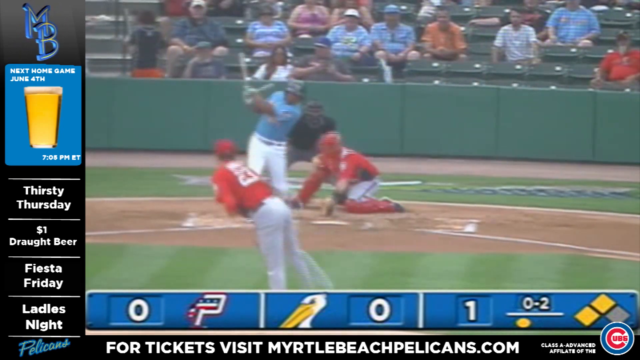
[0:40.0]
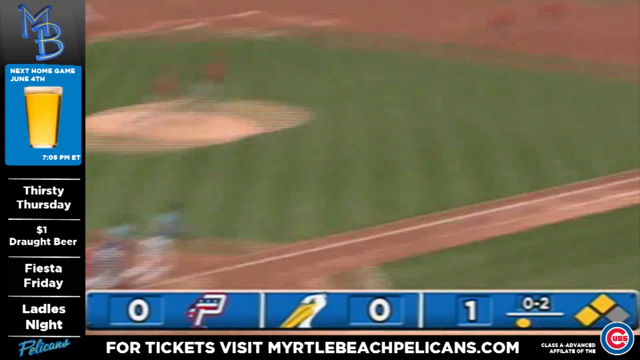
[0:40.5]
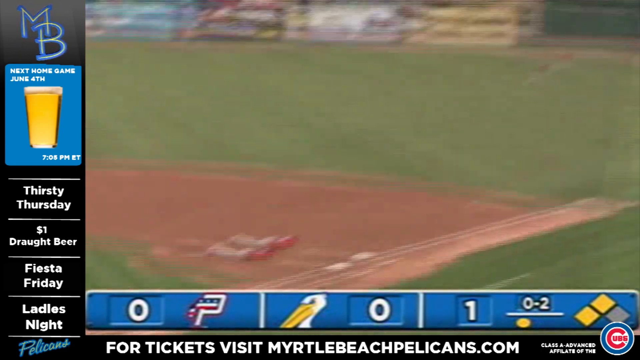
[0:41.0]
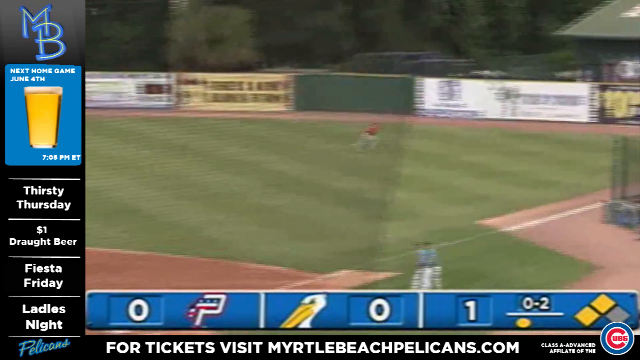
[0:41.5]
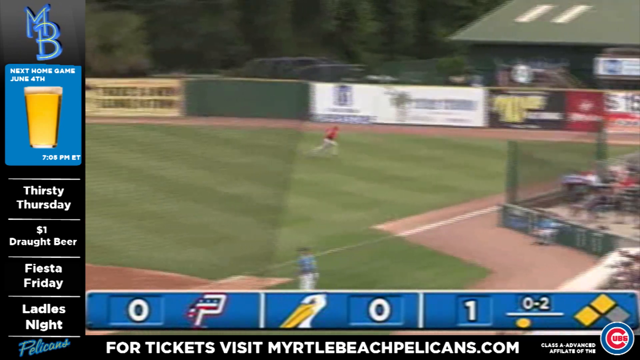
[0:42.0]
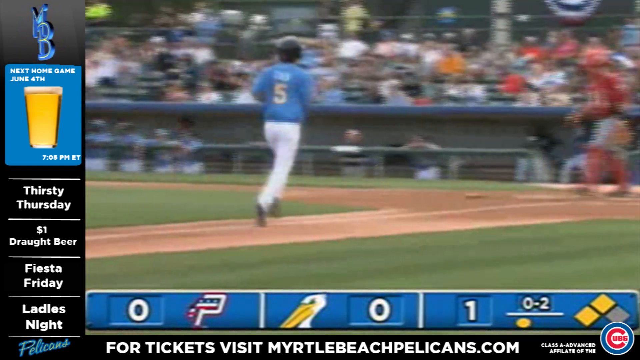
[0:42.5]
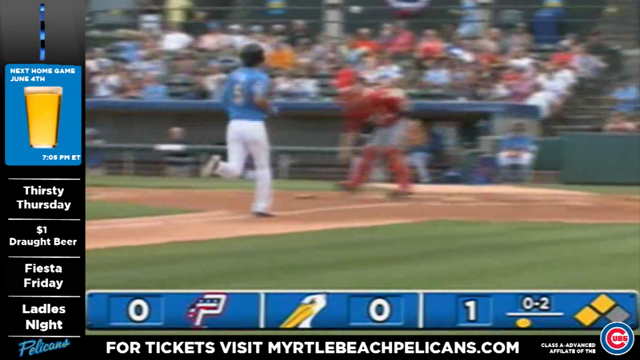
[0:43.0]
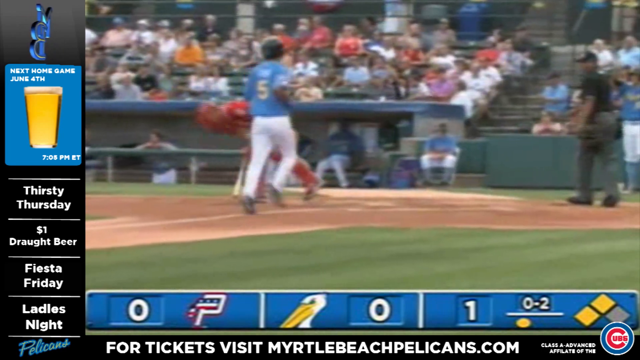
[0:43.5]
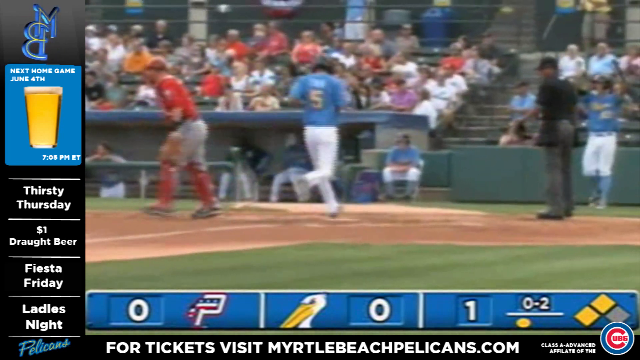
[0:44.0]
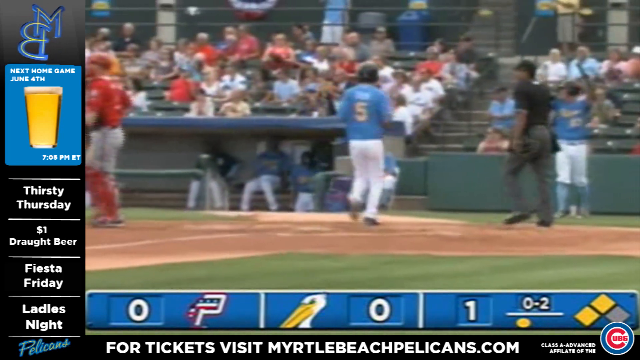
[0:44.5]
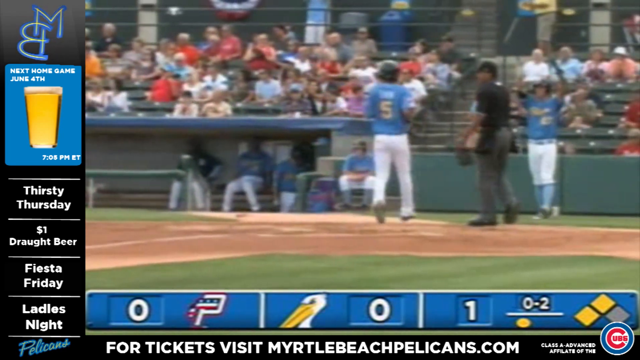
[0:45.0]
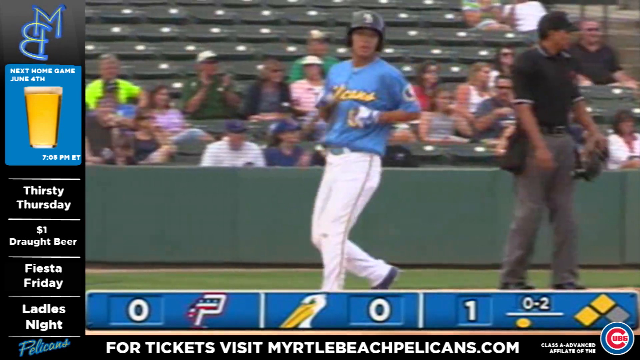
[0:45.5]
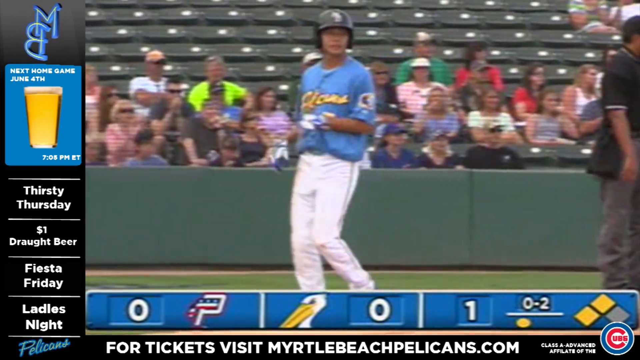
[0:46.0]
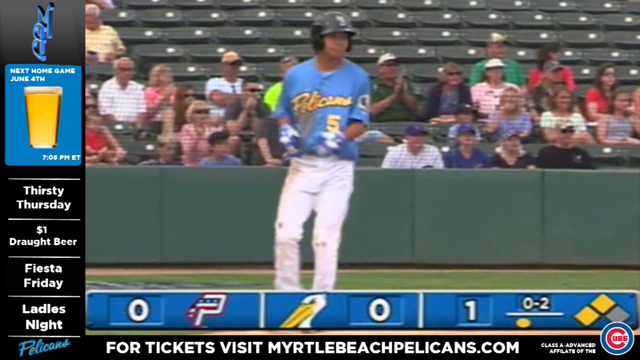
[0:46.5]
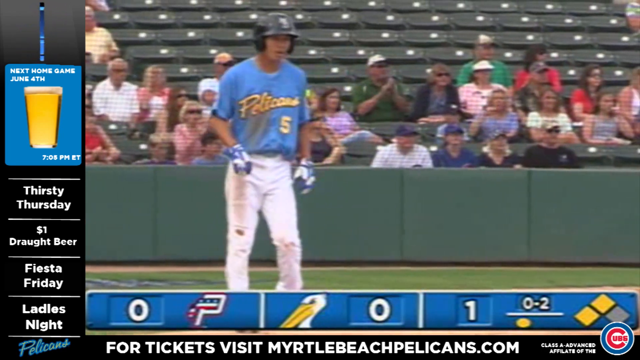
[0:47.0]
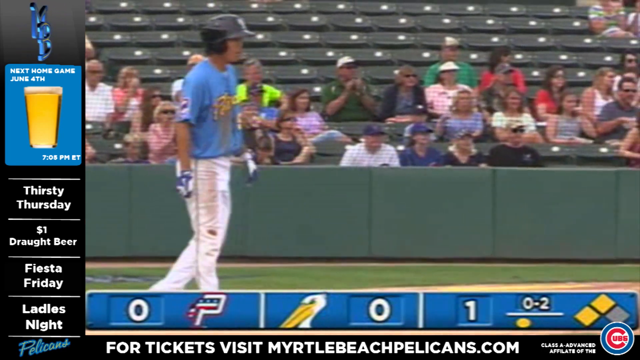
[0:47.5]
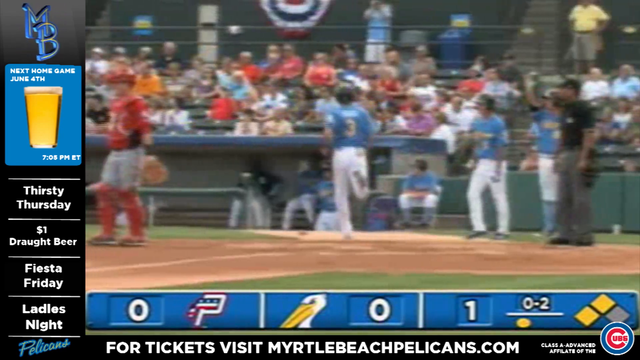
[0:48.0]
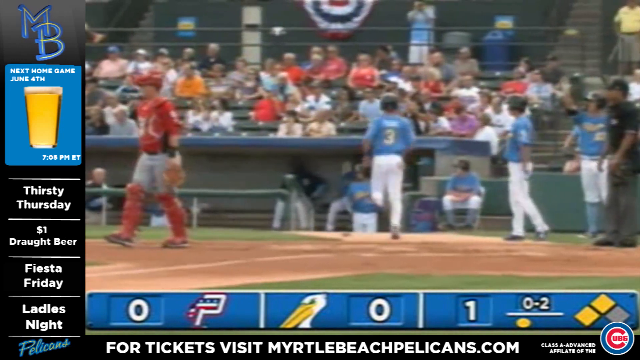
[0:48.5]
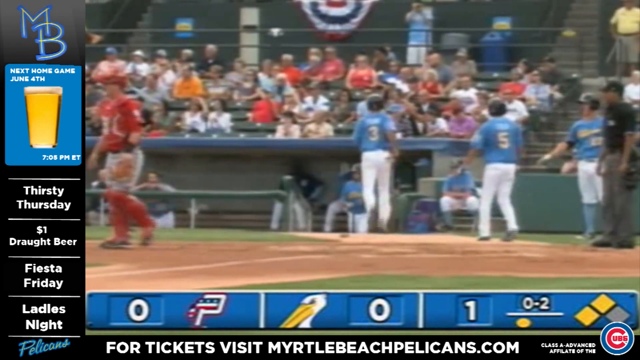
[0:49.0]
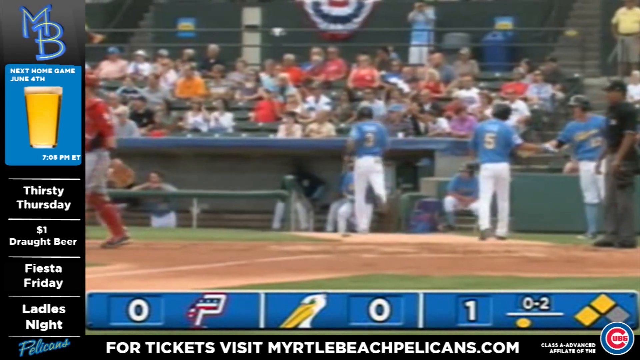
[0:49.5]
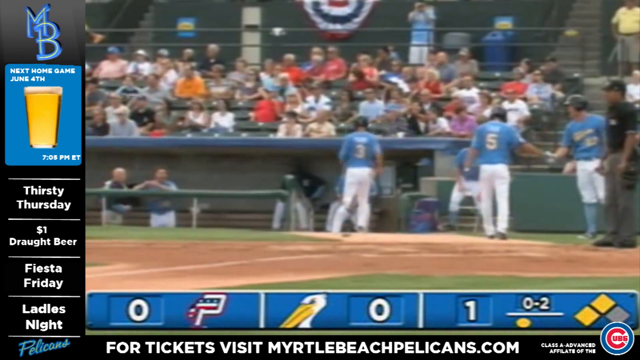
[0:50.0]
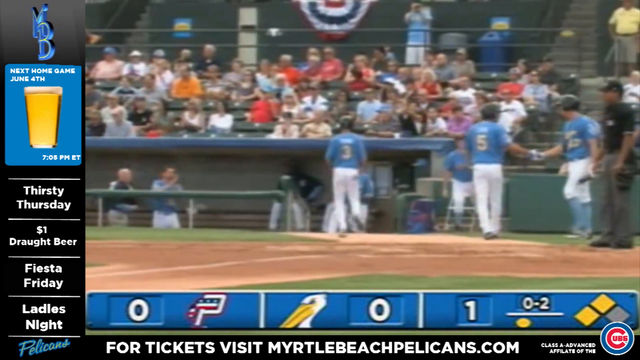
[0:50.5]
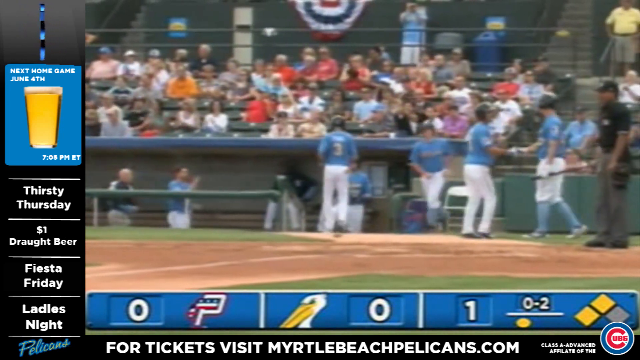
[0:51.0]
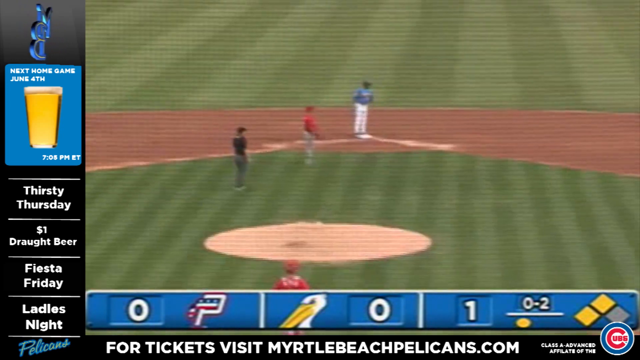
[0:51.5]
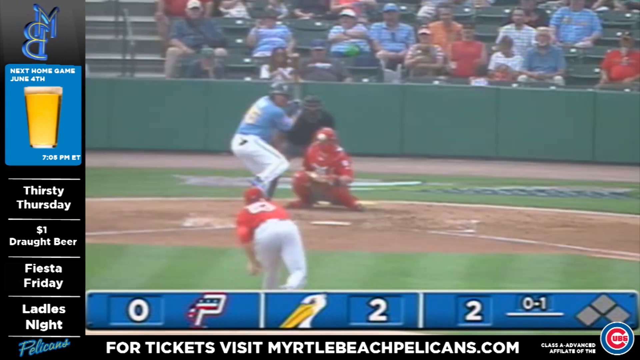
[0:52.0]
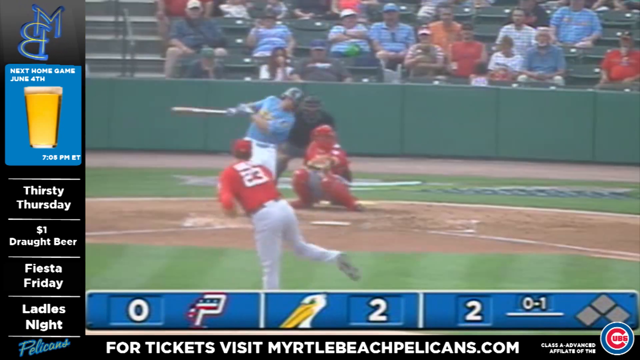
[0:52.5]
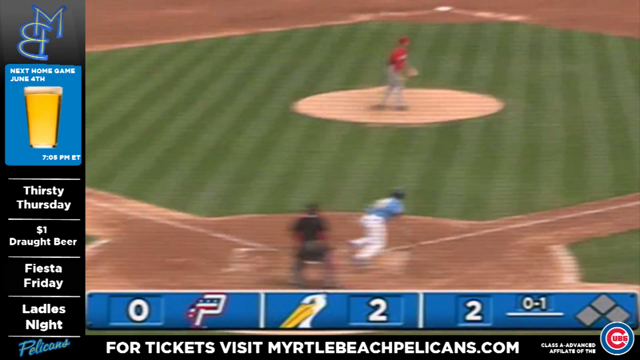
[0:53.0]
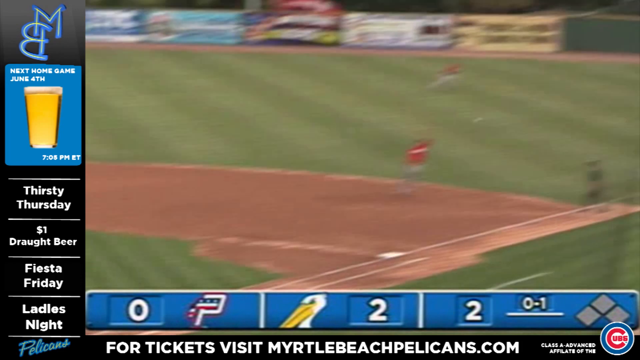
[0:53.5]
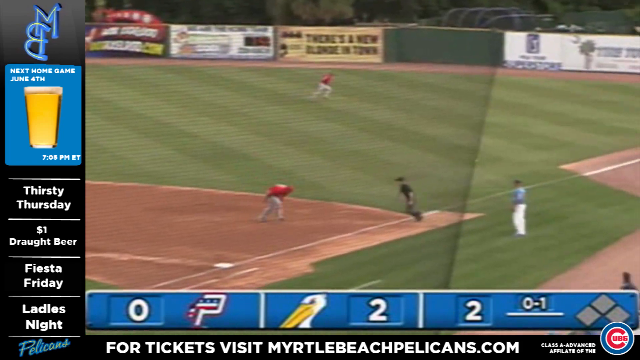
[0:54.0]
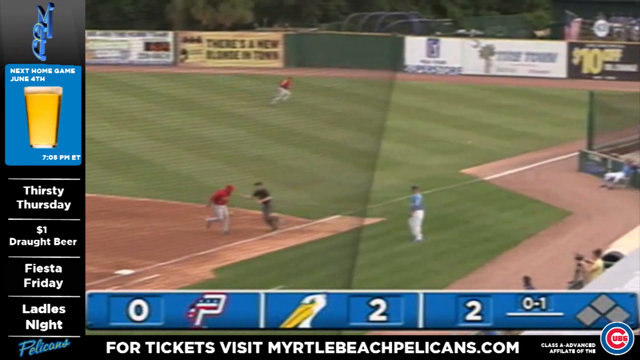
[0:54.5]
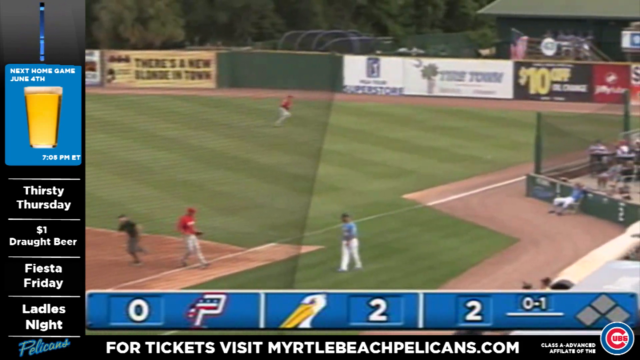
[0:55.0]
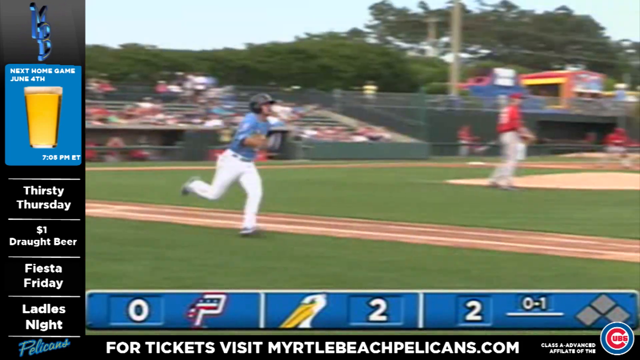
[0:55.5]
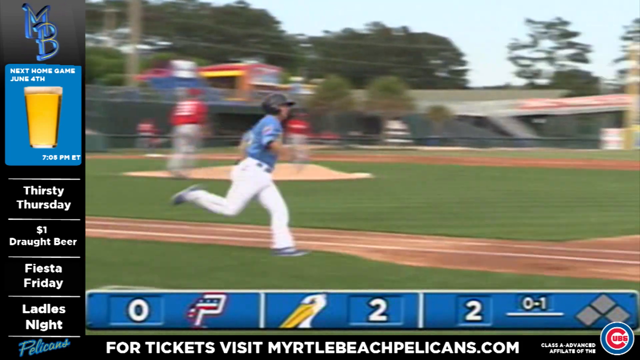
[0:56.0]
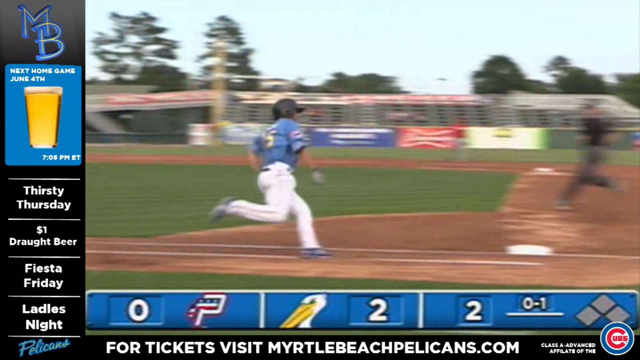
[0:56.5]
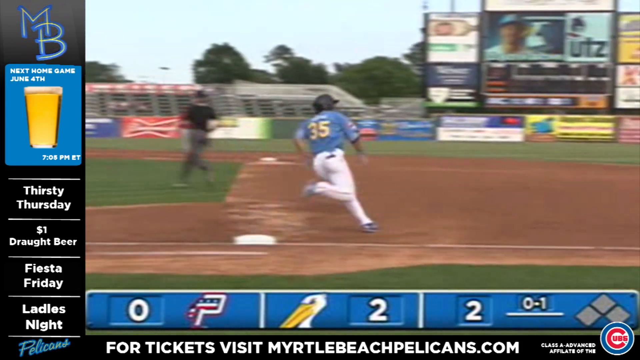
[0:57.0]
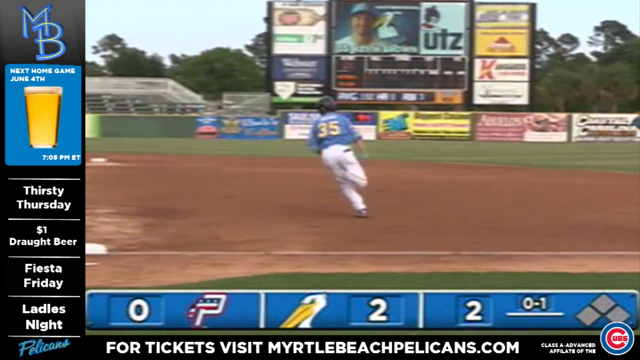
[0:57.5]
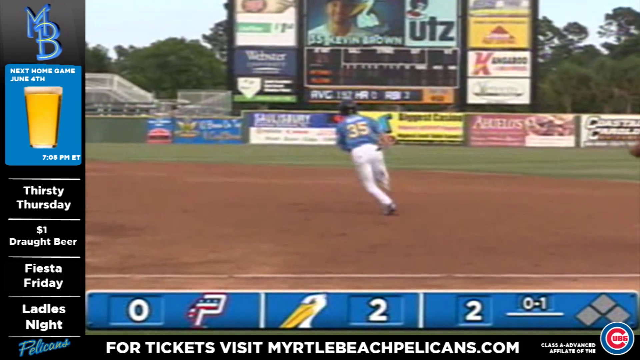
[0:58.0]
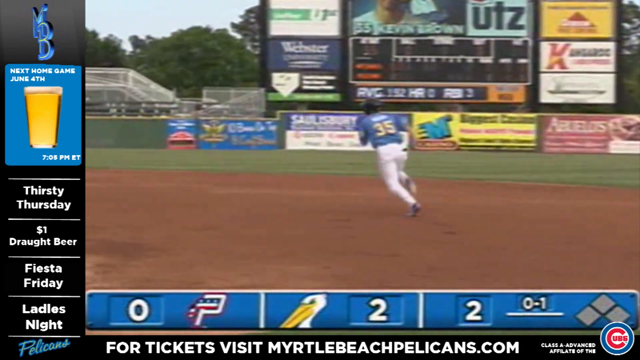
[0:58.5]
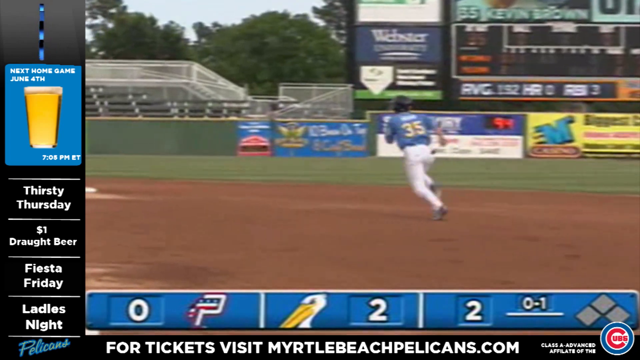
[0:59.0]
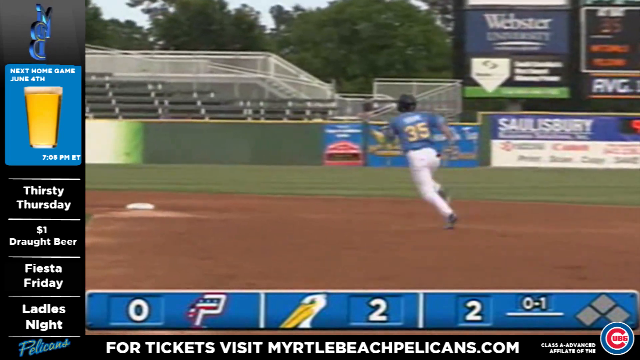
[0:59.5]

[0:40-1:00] The team in red and white plays against the Pelicans, who wear blue. The pitcher's number is hard to see but may be 23. The pitcher throws the ball, and number five runs to first base and appears to be safe. Number three also runs, apparently from third base. The Pelicans appear to be up 2 to 0. Number 35 is still running, touches first base, and heads toward what may be second base; the player at second base has his arms up, ready to catch the ball and make the out. The shot stops while the runner is in mid-run.